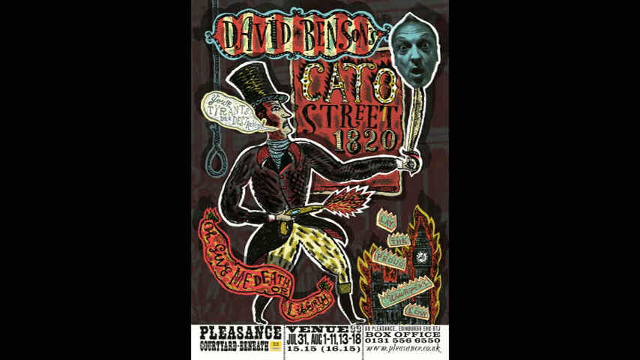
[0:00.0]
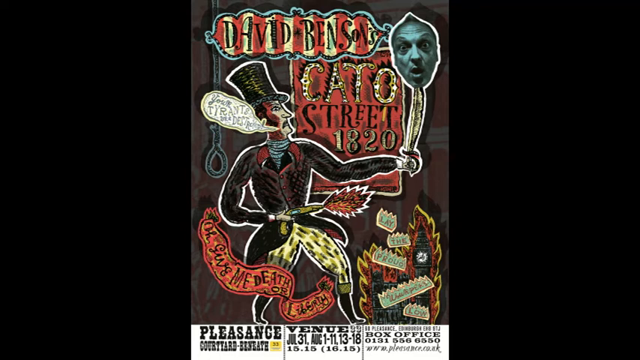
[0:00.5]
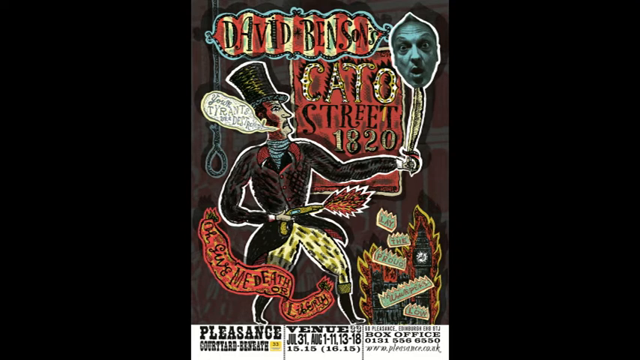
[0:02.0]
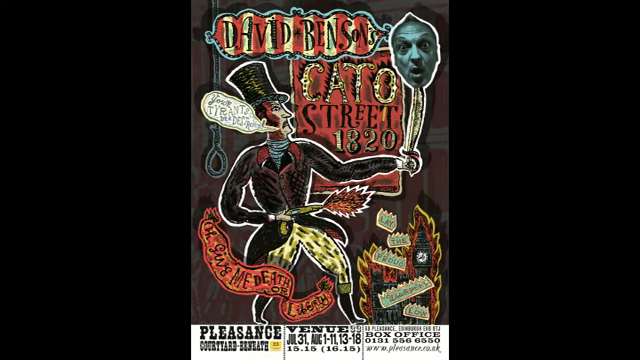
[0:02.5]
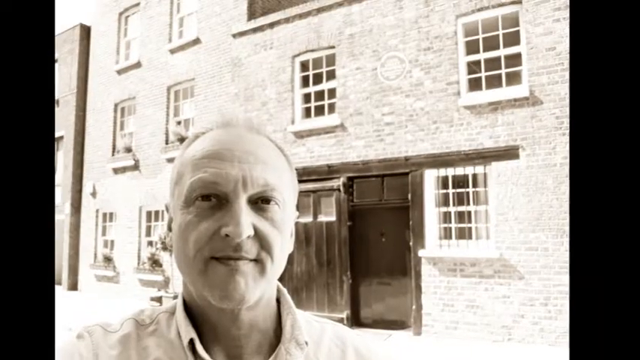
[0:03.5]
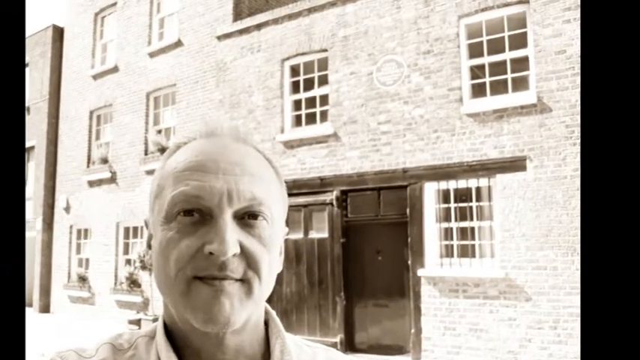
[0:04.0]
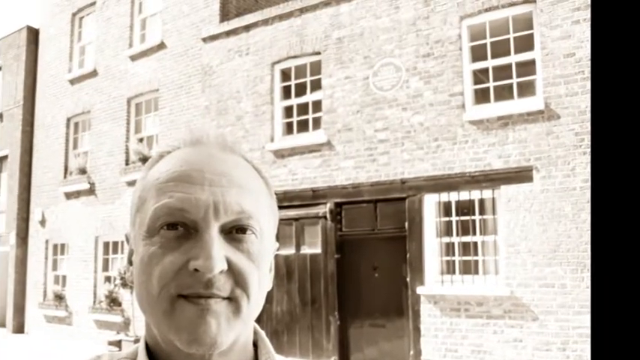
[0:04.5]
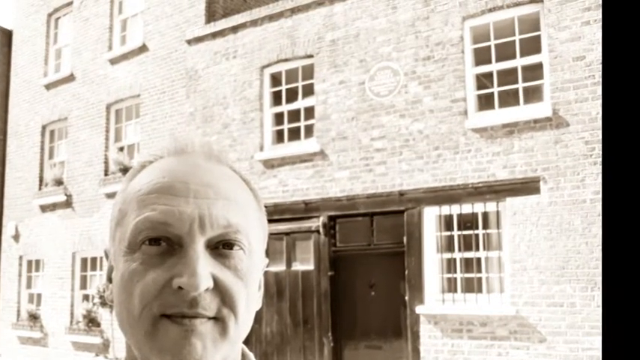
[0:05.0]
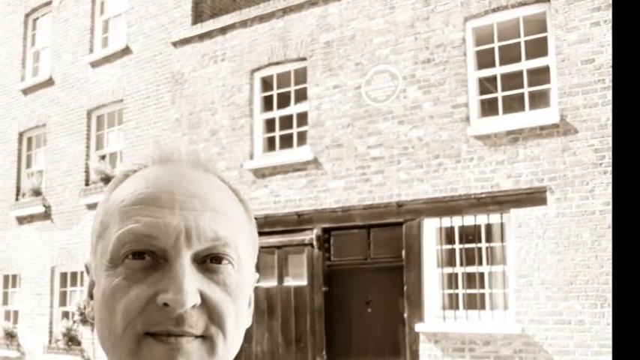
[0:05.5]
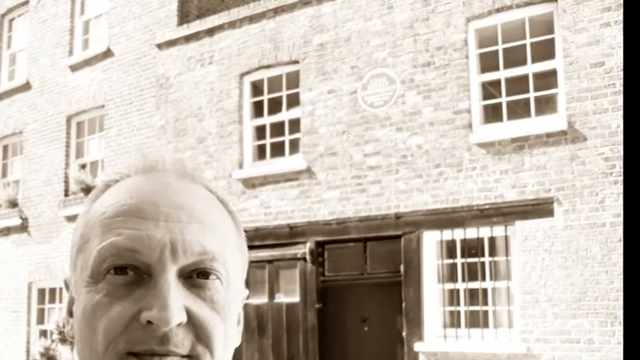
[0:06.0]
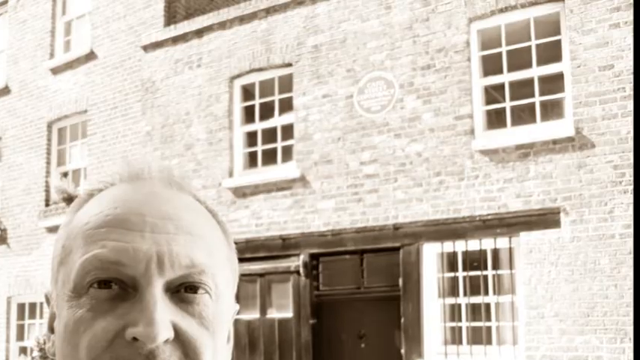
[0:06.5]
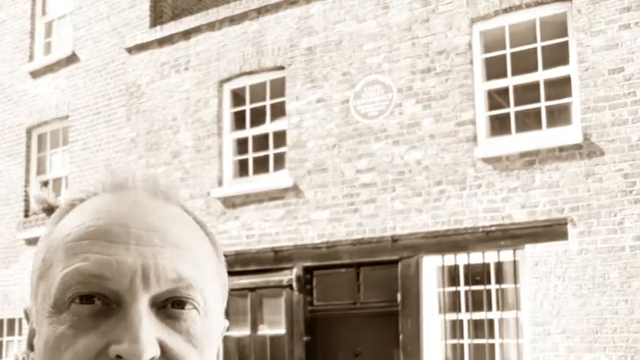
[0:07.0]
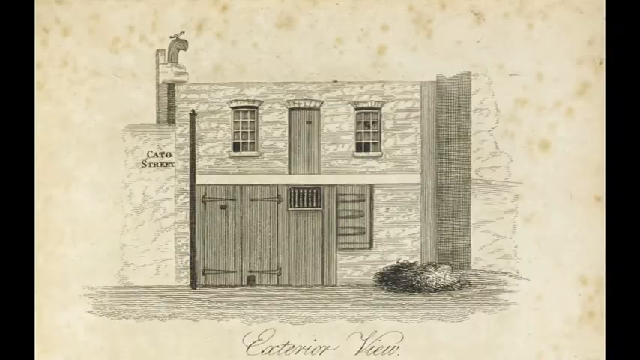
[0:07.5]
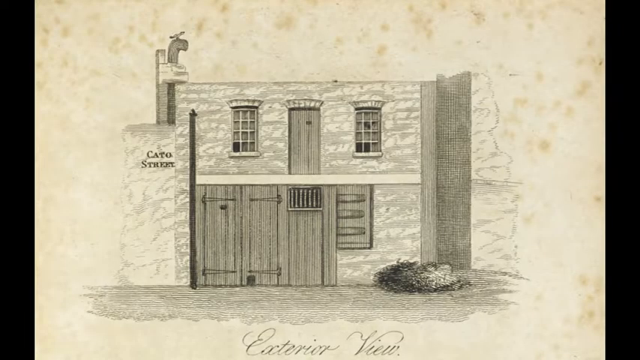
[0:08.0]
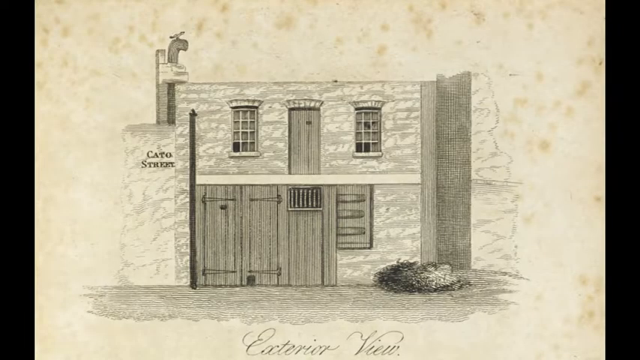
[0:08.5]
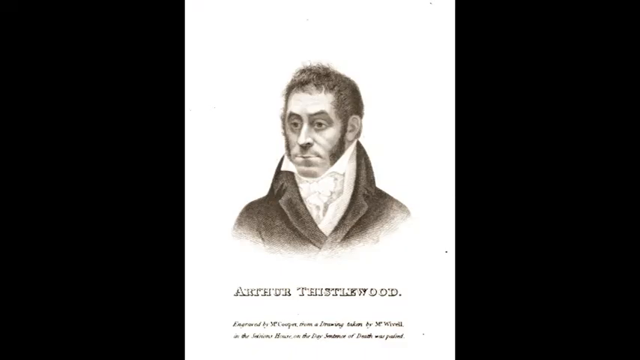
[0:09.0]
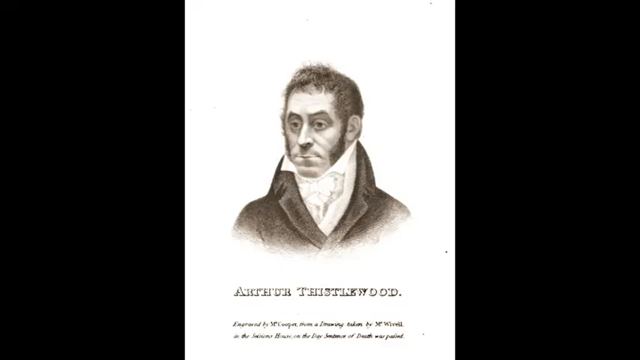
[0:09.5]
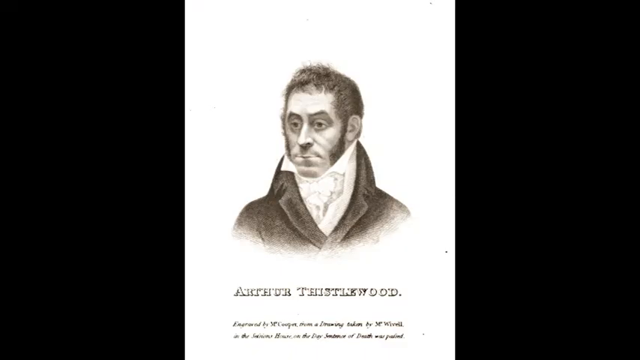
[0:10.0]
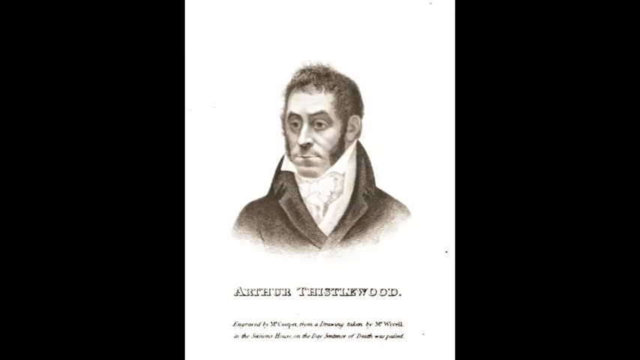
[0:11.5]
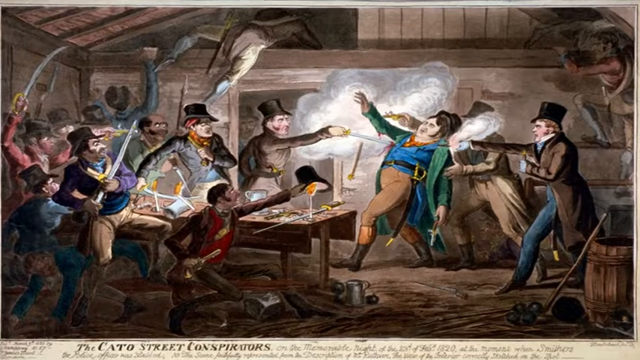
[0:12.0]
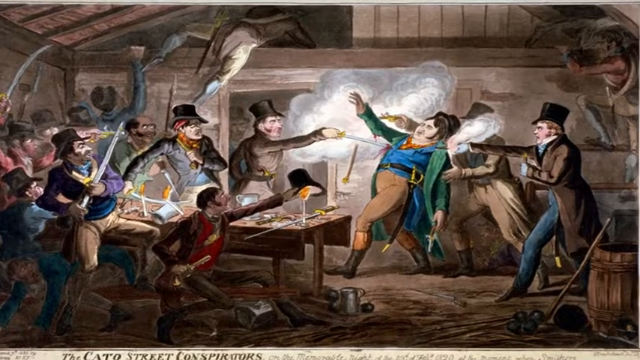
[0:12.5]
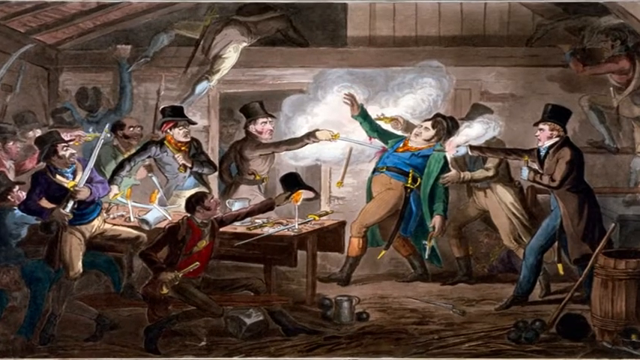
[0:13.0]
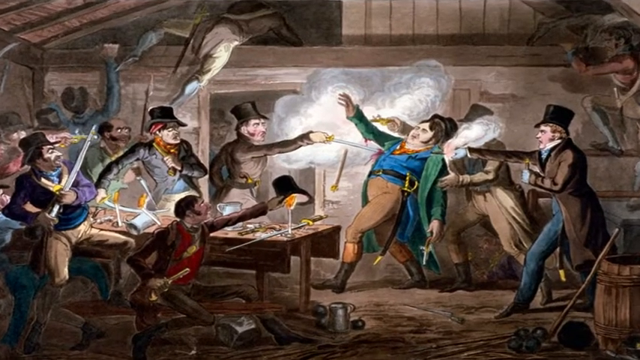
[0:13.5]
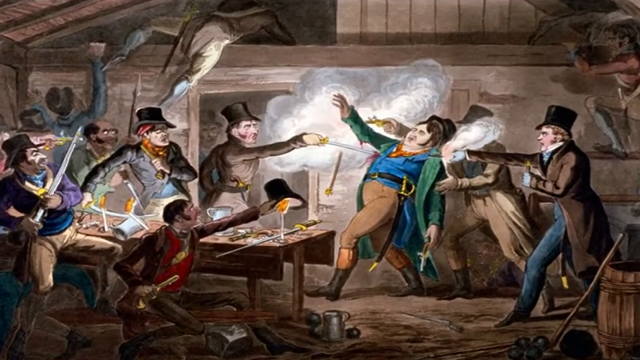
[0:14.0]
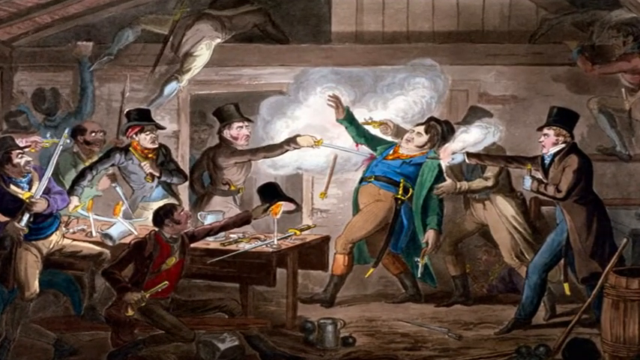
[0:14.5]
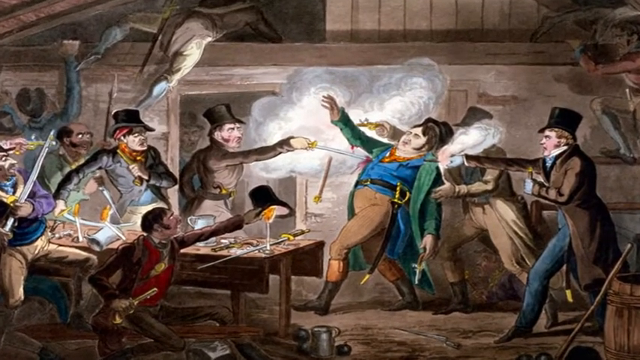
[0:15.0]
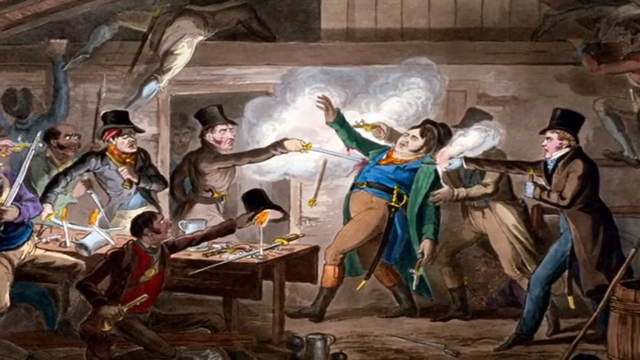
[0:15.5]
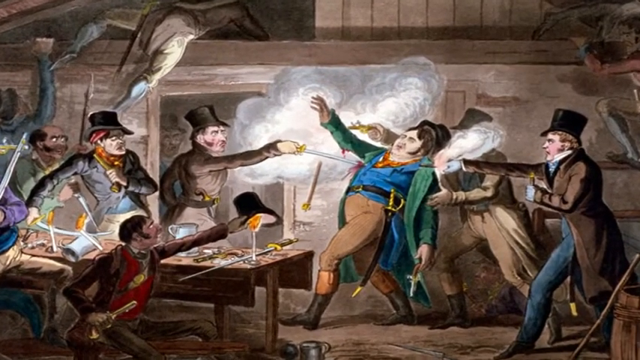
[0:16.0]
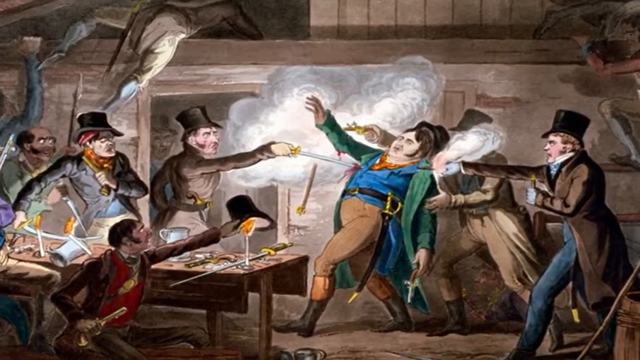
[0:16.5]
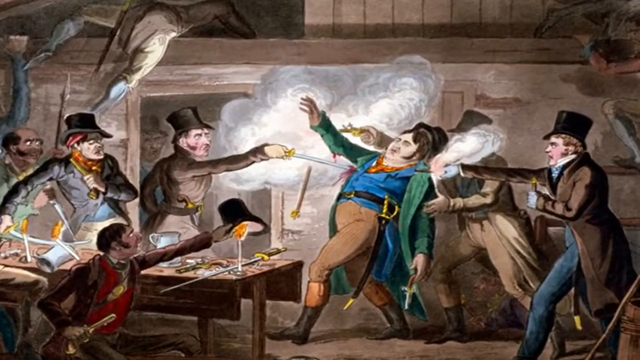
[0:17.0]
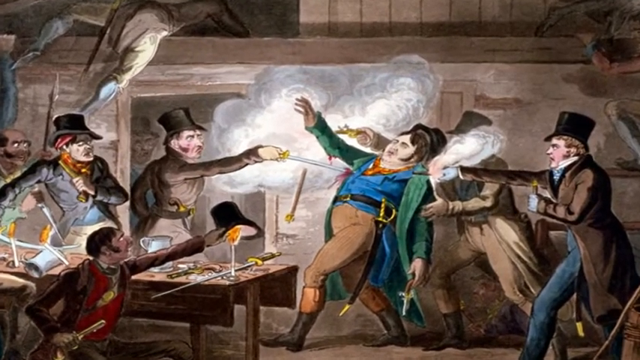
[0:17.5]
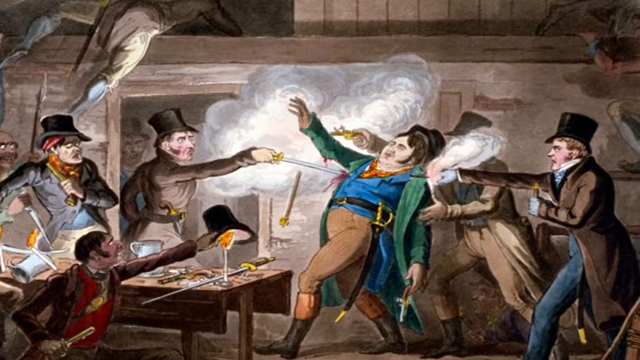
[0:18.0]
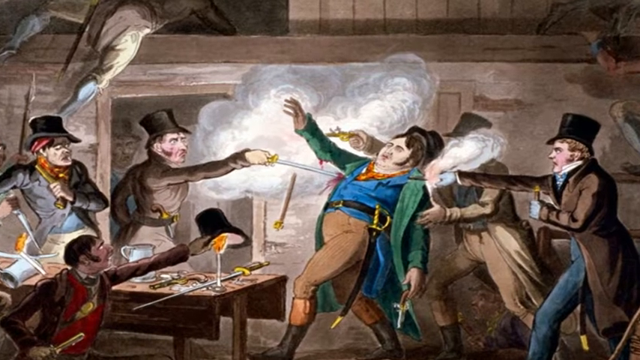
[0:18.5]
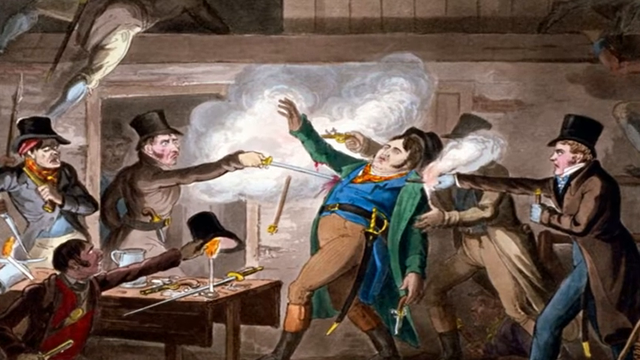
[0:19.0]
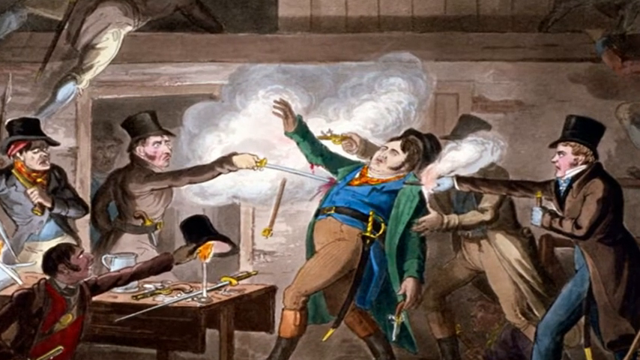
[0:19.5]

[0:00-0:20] A poster appears that looks like a sort of carnival-like setting. At the top, inside a sort of cloud-like shape, the name David Benson is written in black. The background inside the cloud is vertical stripes alternating red and yellow over and over, and the cloud has a black border. To the right of it is the face of an actual person, presumably David Benson, with white skin, short hair standing vertically up, and a very open-mouthed, shocked expression. Beneath the name, in the middle, are the words "Cato Street 1820". On the left there appears to be a drawn person in a black top hat, with white skin and a black mustache, wearing a black jacket and yellow pants and holding a yellow gun in the right hand with fire coming out of it. The scene switches to a real-life photo of a white man with short gray hair looking towards the camera, and the camera zooms in on the building behind him, a brick building with two windows. The scene then switches to a drawing of that same building on Cato Street, which appears to be a mixture of brick and wood, with wood mostly on the doors. Next comes a drawing of another man looking to the left, with short black hair and mutton-chop sideburns. The scene then switches to a different drawing of a group of men fighting. On the left are about six men, one of them holding a weapon that appears to be a sword towards the man on the right. There are three men in total on the right. They appear to be in some type of wooden area, and there is white smoke in the middle.